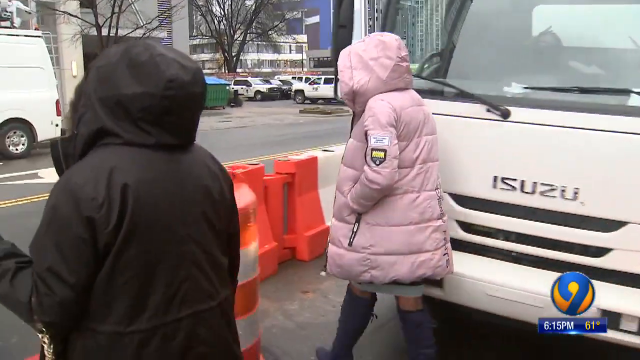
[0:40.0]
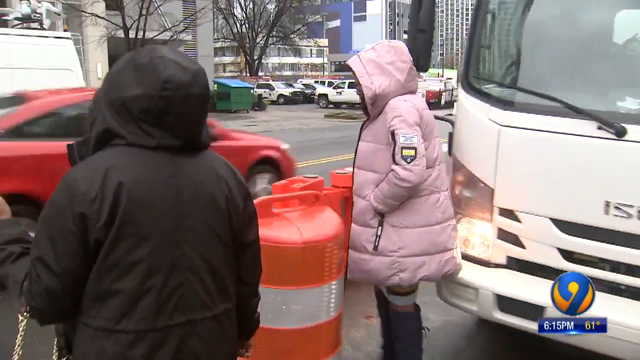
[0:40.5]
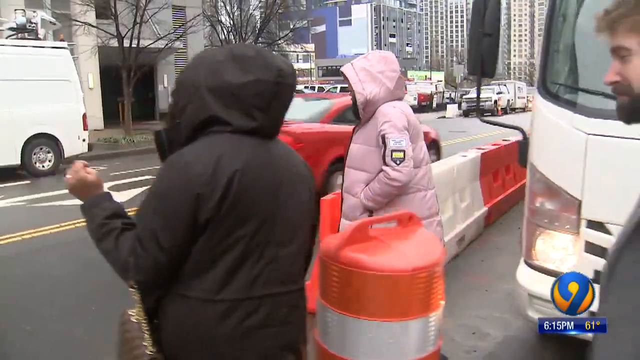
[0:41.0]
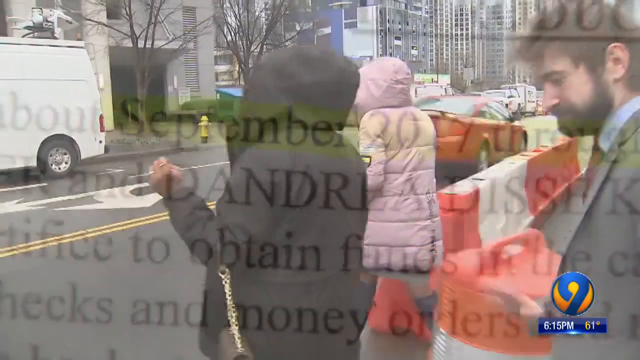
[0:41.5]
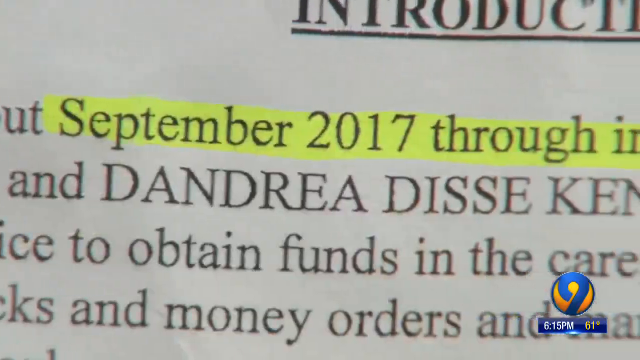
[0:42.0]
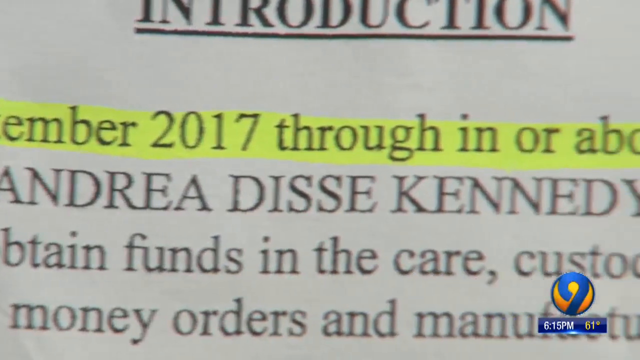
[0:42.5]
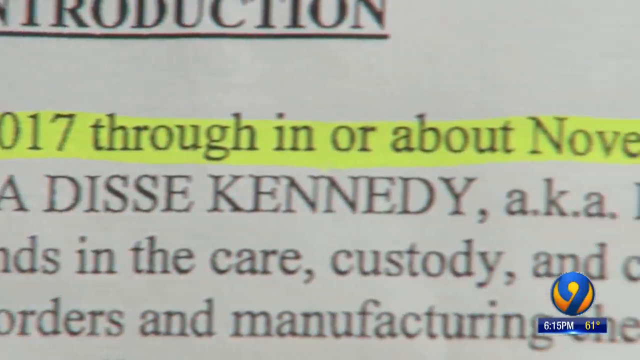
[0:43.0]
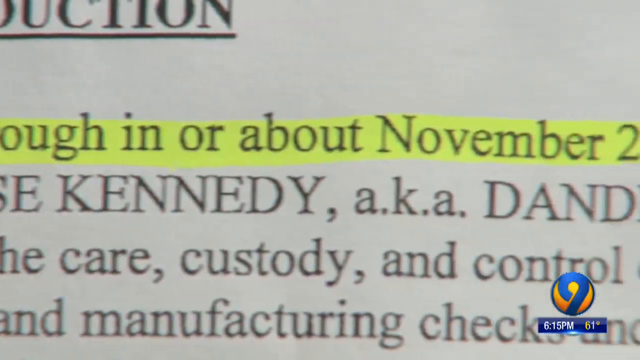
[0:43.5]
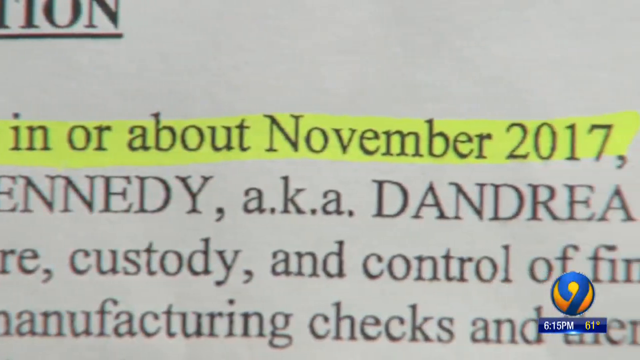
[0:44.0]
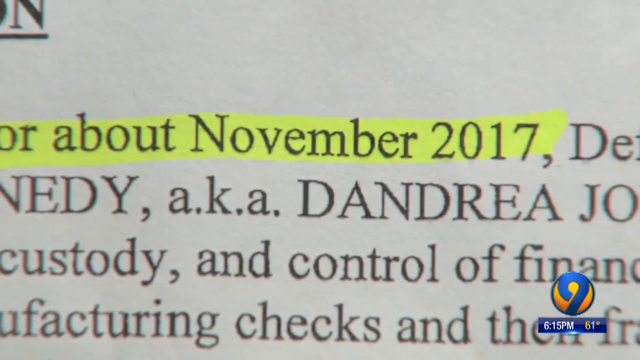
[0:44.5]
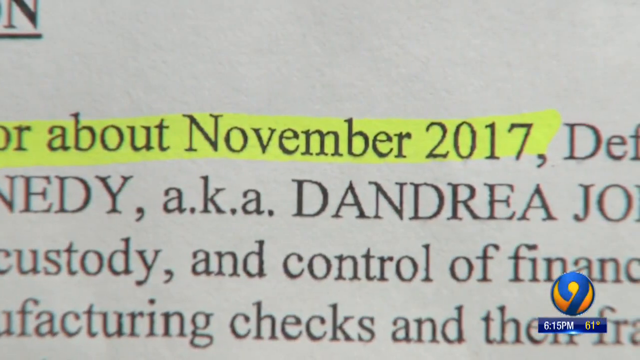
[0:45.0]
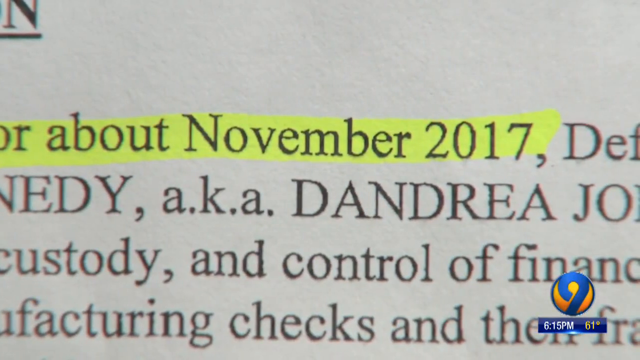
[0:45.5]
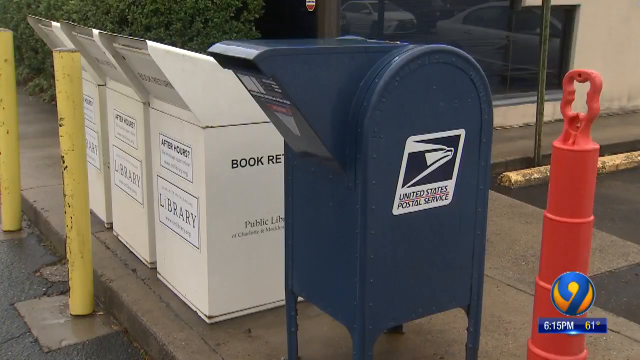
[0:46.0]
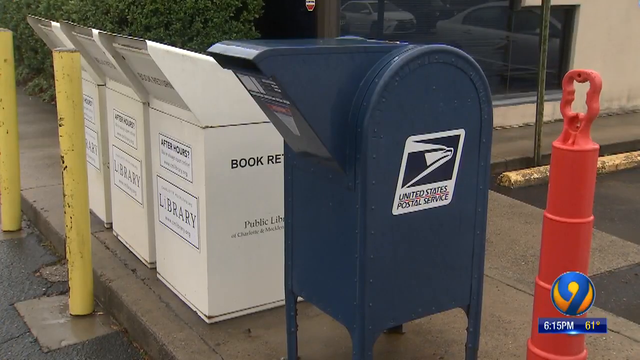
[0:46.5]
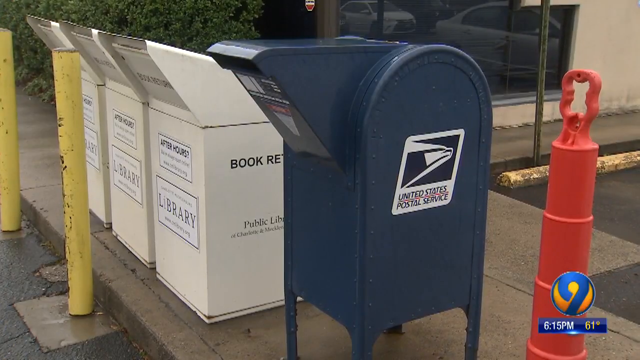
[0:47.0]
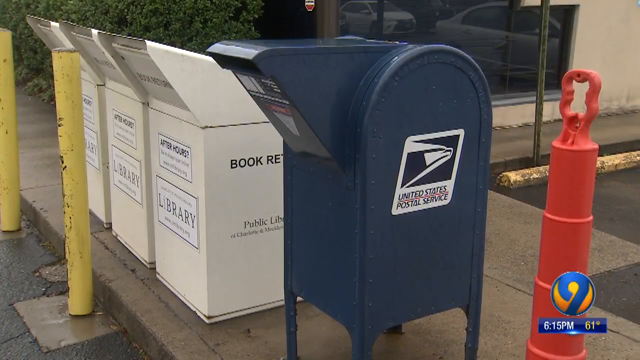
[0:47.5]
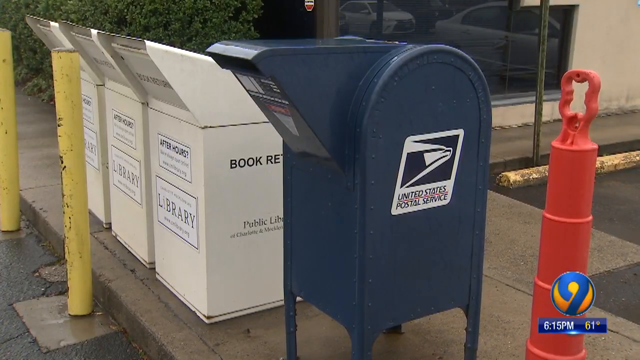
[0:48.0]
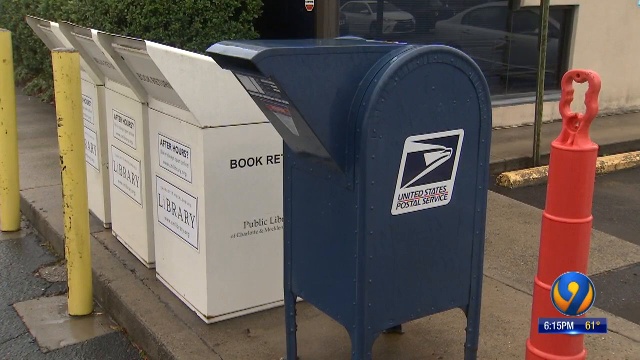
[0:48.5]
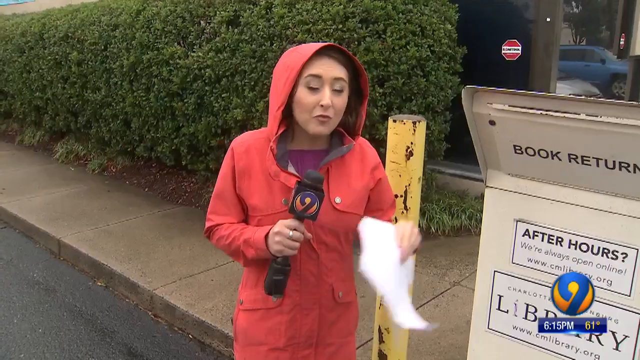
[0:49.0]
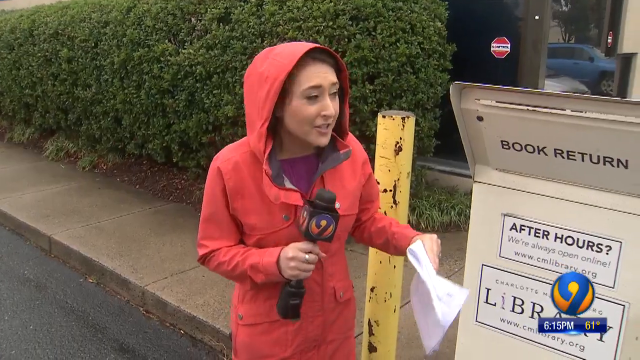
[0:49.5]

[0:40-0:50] The same two ladies are at the same spot, with road cones on the road; it appears to be cold, and there are other cars around the area. A red car passes them, and the white man behind them, apparently their lawyer, is briefly visible. The scene changes and zooms in on a document, where the date "September 2017 through" is highlighted in yellow, along with names; the document is shown moving from right to left. The scene then changes to an outside area with a blue post box reading "United States Postal Services". Next to it are library book returns reading "book returns", three of them, with a red cone and two yellow posts in front of them. A reporter wearing a raincoat stands in front of the book return boxes, talking about them.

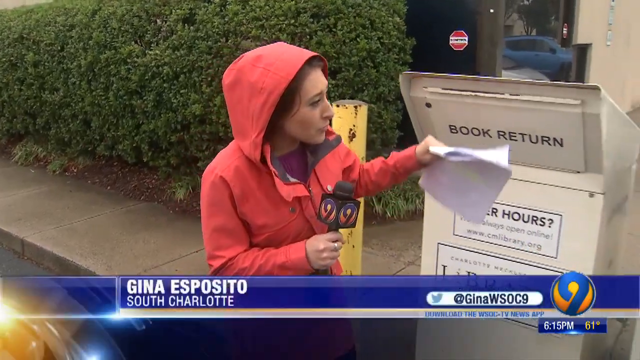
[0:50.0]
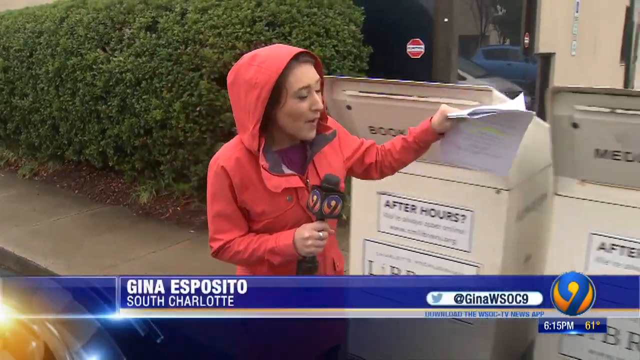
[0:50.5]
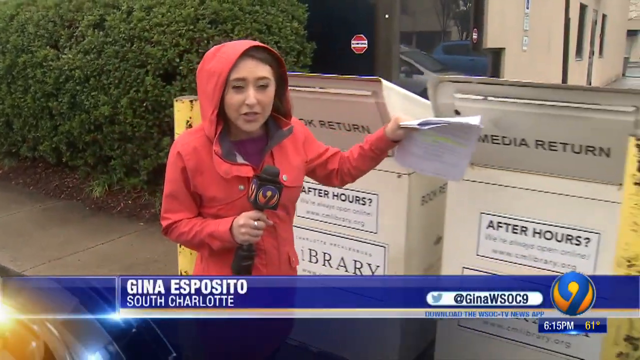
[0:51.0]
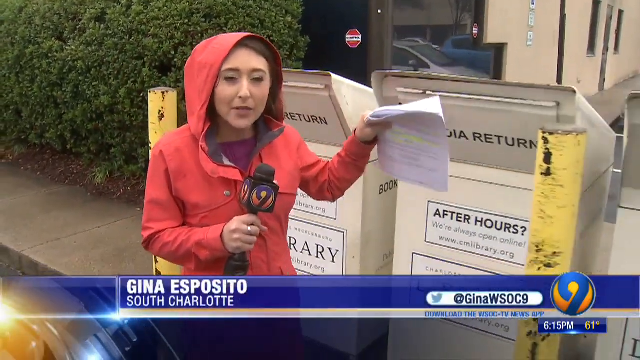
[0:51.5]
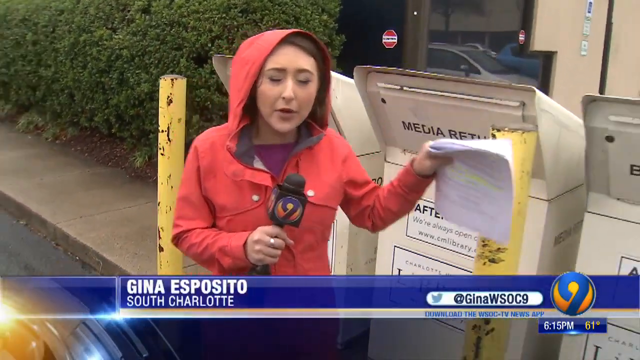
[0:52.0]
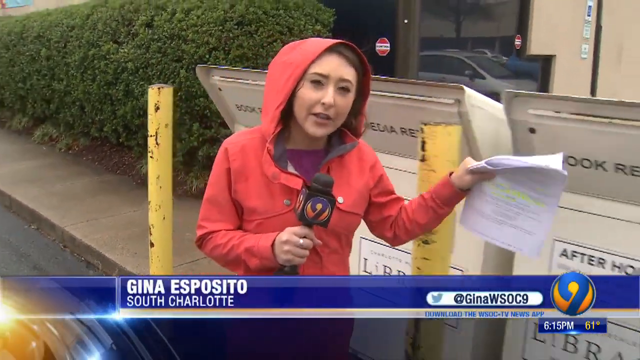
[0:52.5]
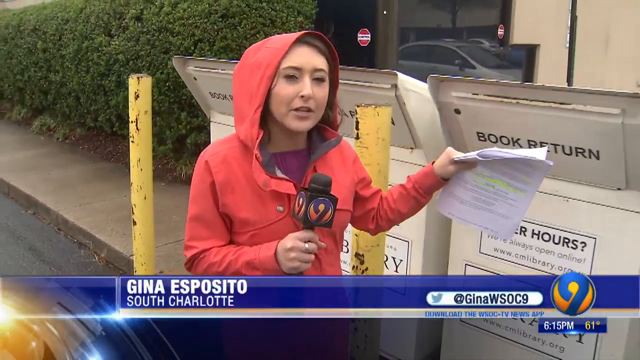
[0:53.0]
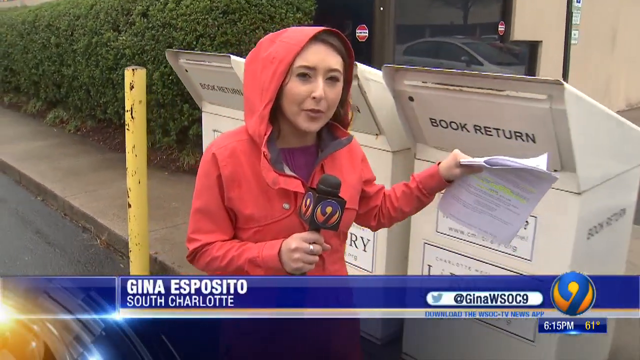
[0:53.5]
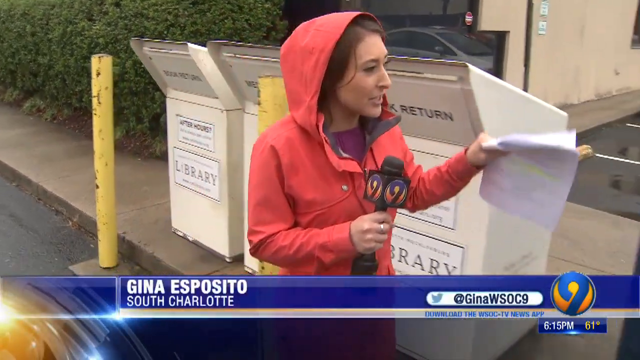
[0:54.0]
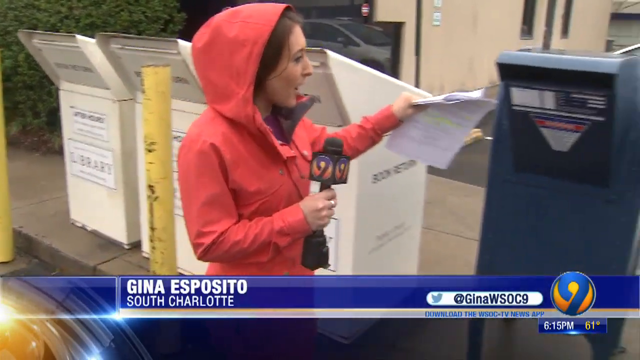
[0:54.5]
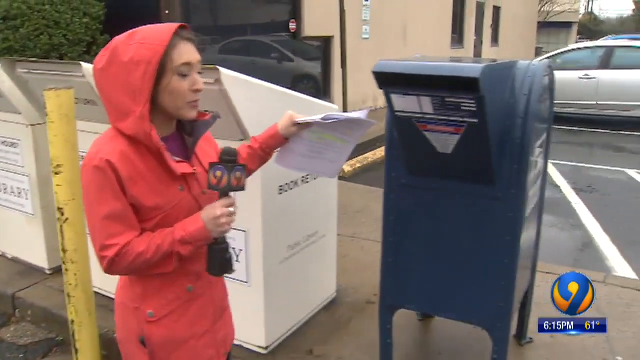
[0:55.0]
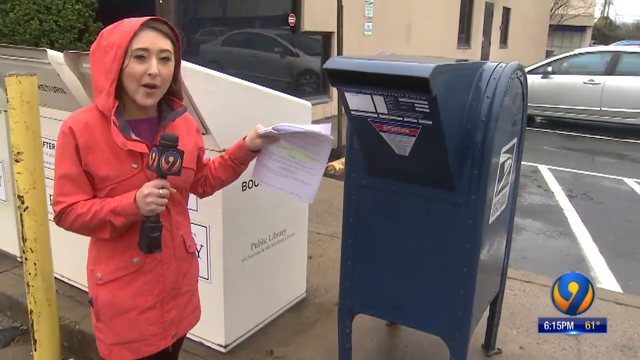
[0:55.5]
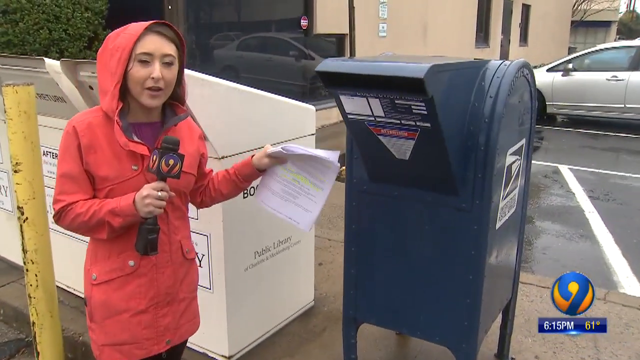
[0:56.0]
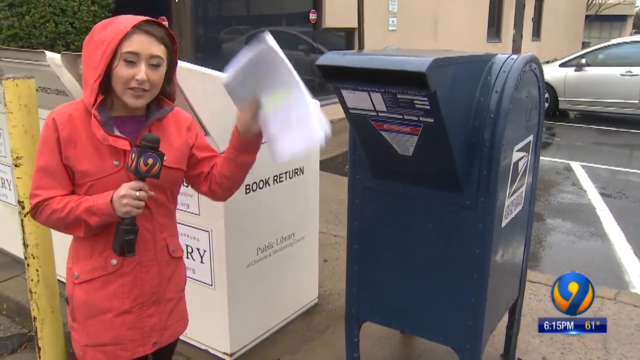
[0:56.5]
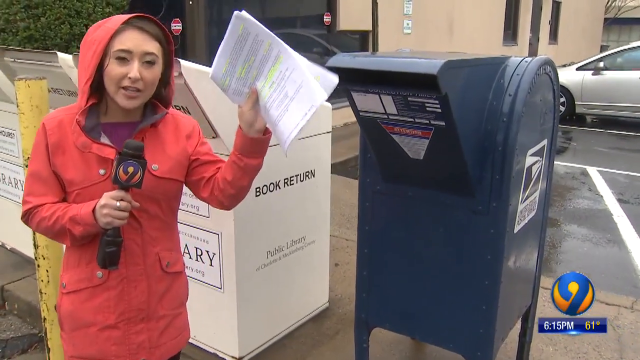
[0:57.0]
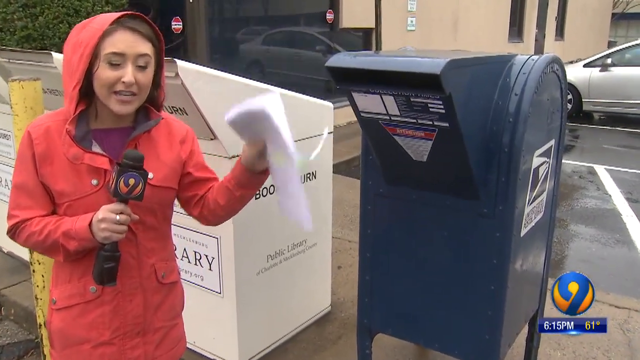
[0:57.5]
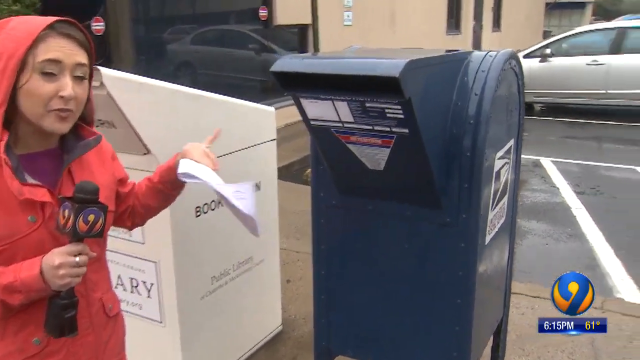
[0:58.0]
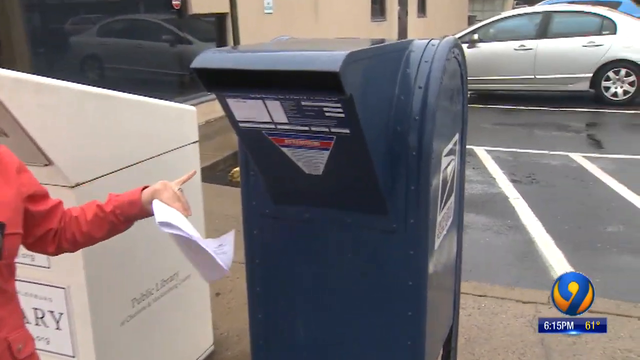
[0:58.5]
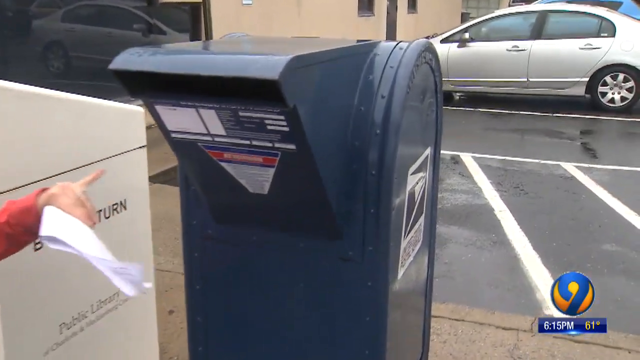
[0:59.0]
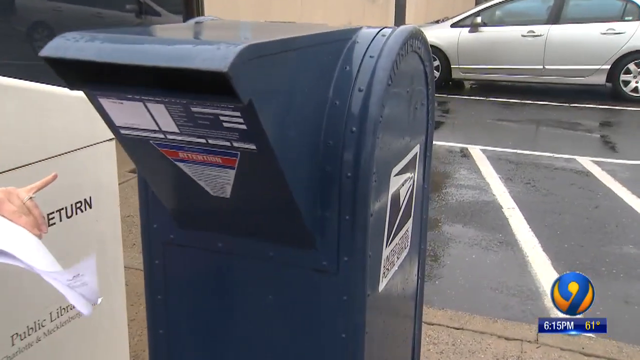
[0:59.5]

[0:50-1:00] Gina Esposito, in South Charlotte, appears to be a news reporter, judging from the microphone she holds. She wears a red coat and holds some papers. Behind her is a hedge that appears green, and there is a yellow pole next to the book return box. On the far right of the screen is a Twitter handle reading "at Gina WSOC9". She appears on camera describing the book return boxes and the postal box. A car can be seen from her angle, and there is a building next to the area and a car park. The scene quickly changes to the document, which is not clearly visible.